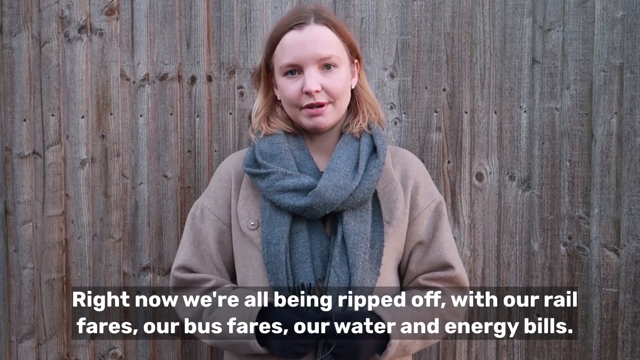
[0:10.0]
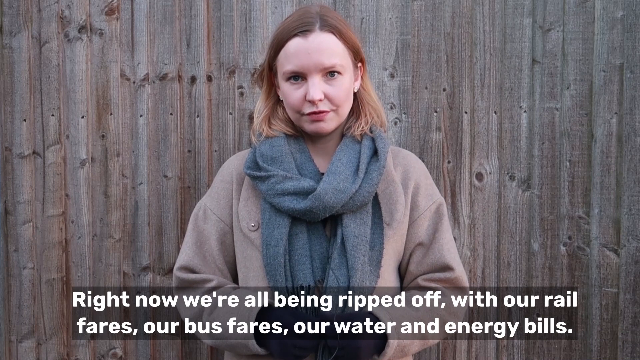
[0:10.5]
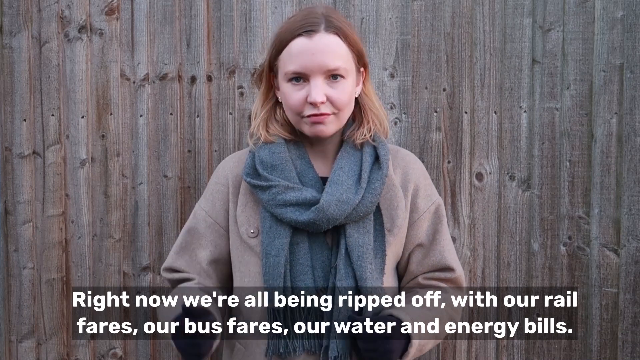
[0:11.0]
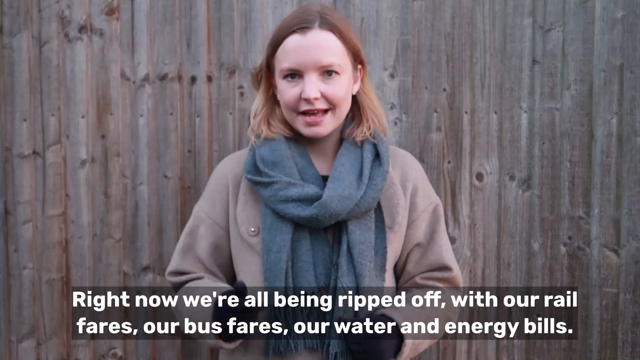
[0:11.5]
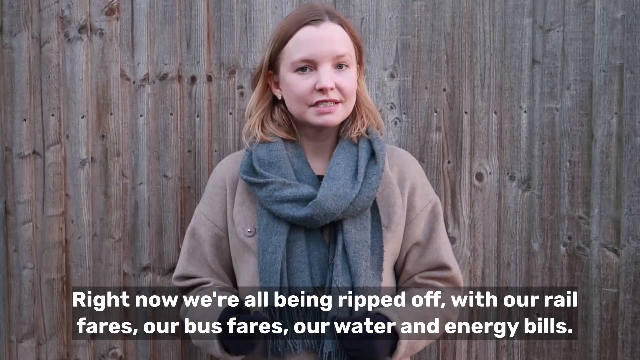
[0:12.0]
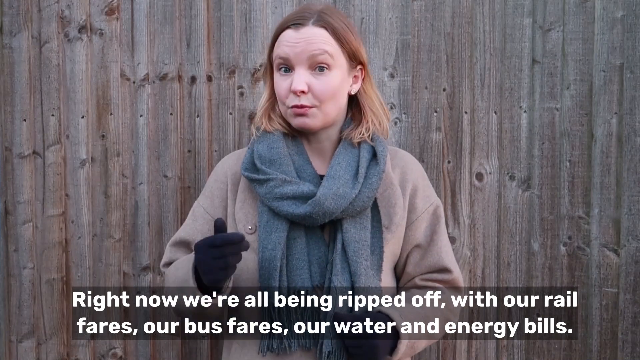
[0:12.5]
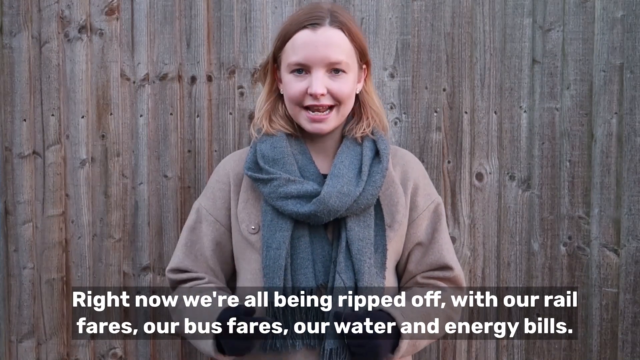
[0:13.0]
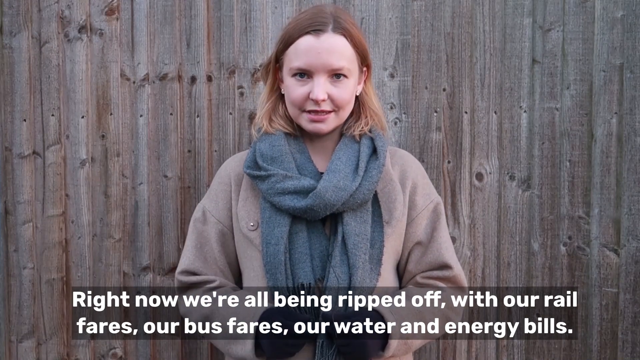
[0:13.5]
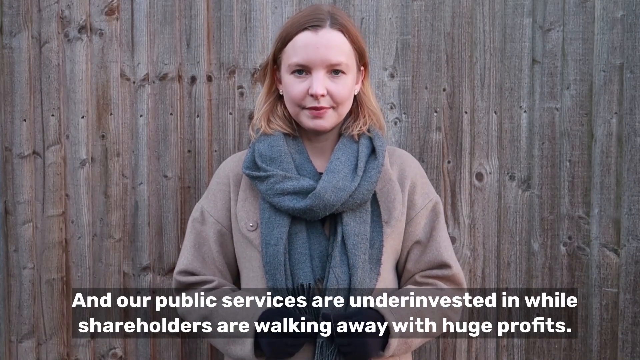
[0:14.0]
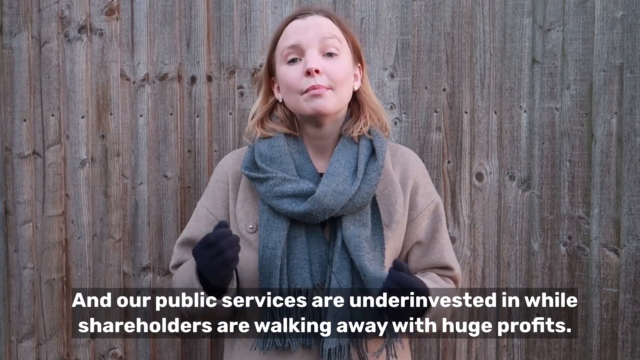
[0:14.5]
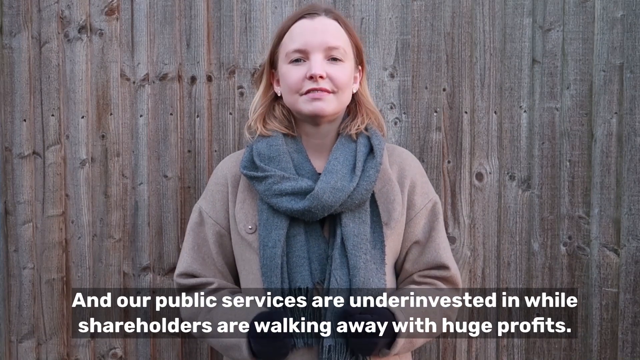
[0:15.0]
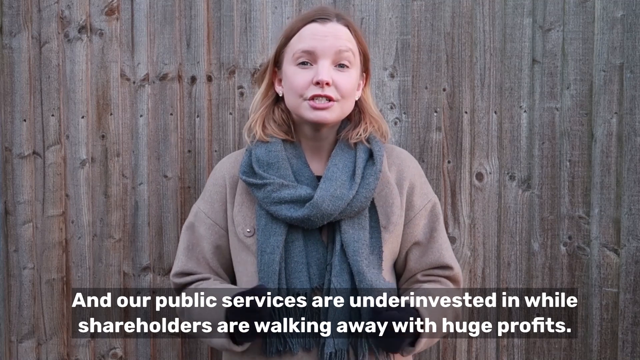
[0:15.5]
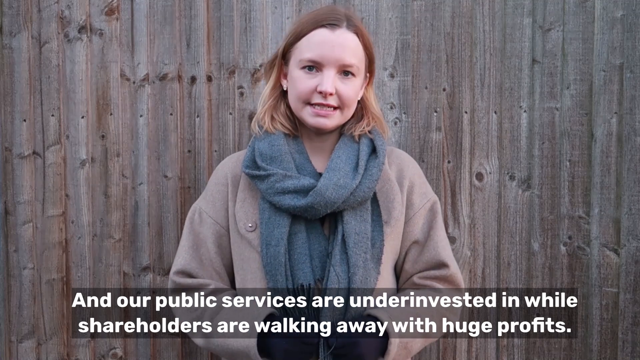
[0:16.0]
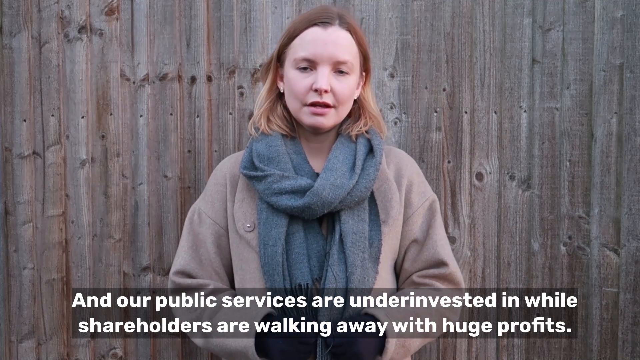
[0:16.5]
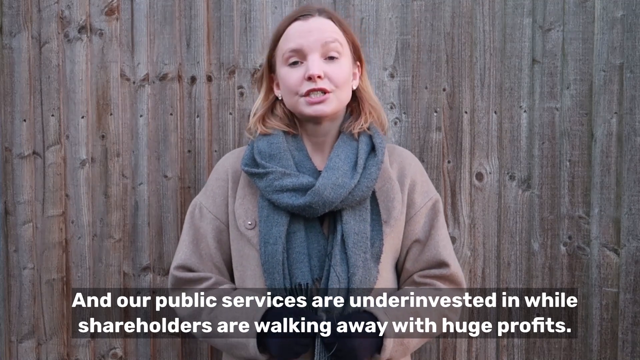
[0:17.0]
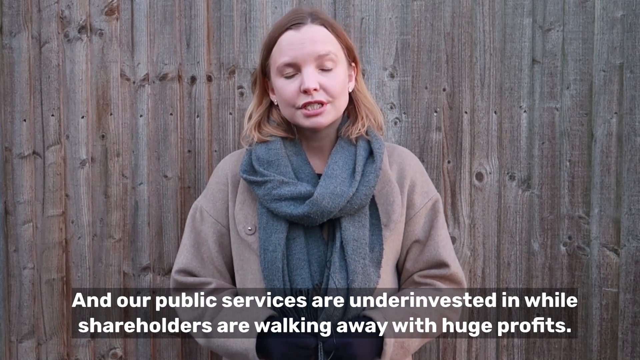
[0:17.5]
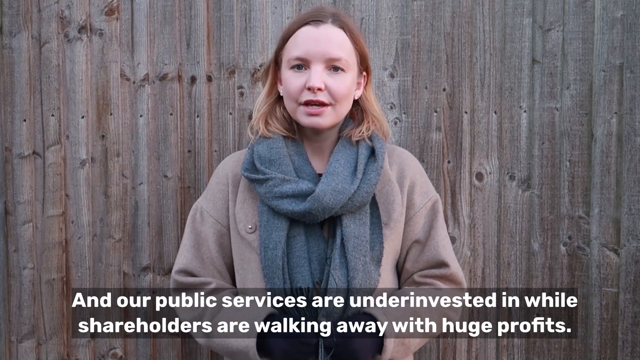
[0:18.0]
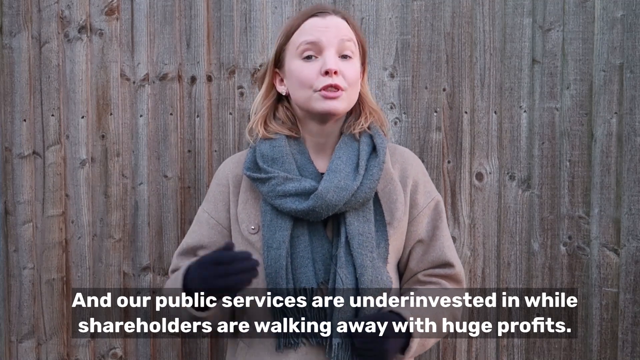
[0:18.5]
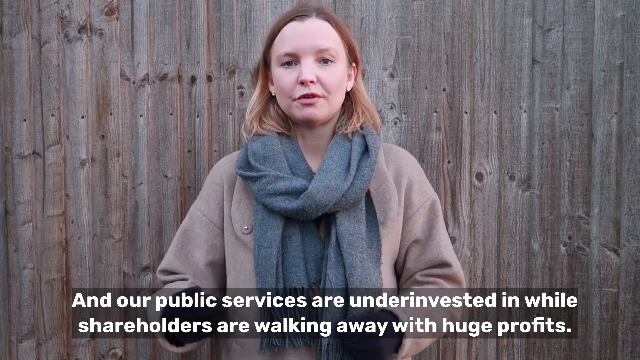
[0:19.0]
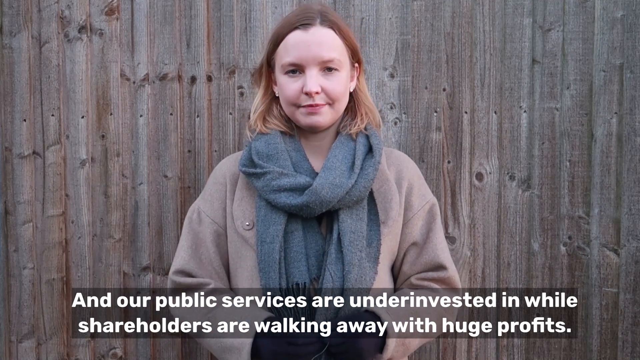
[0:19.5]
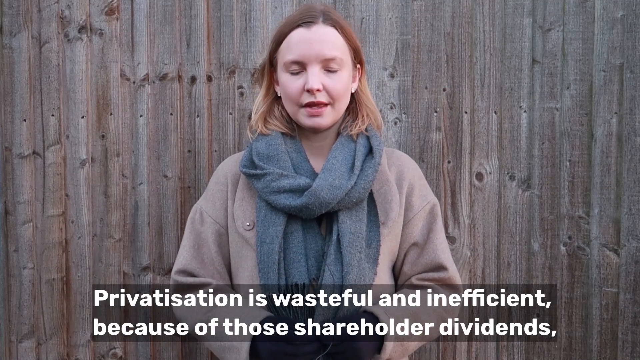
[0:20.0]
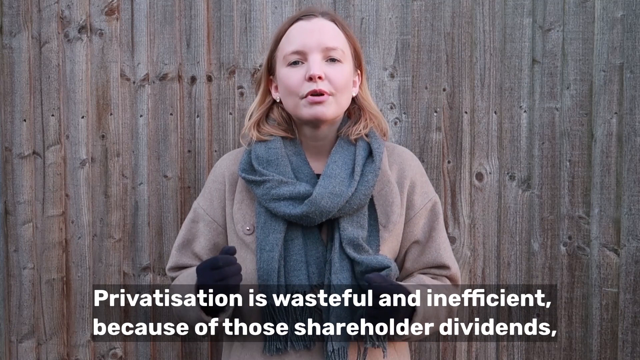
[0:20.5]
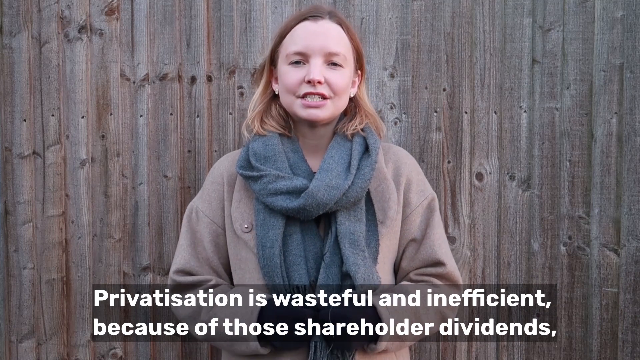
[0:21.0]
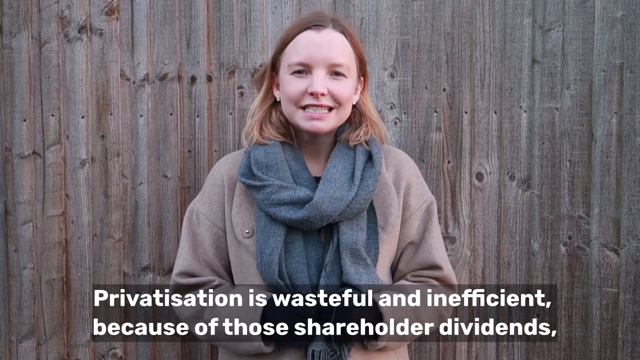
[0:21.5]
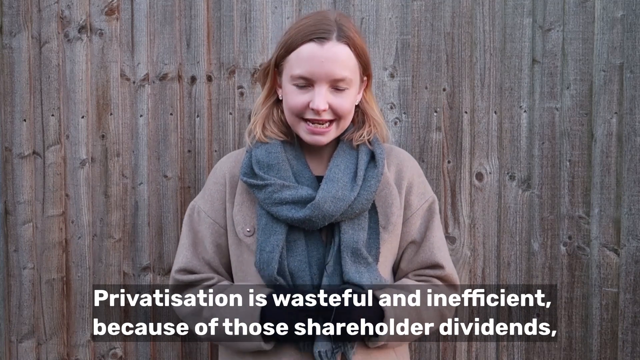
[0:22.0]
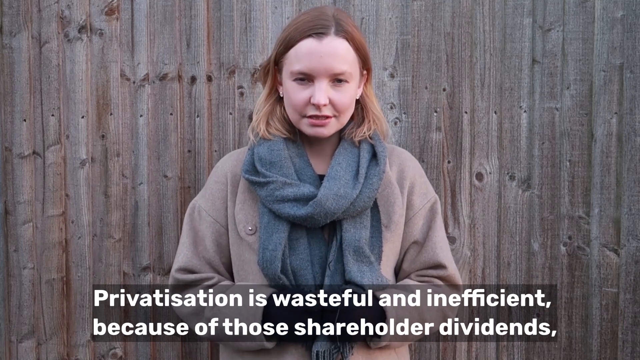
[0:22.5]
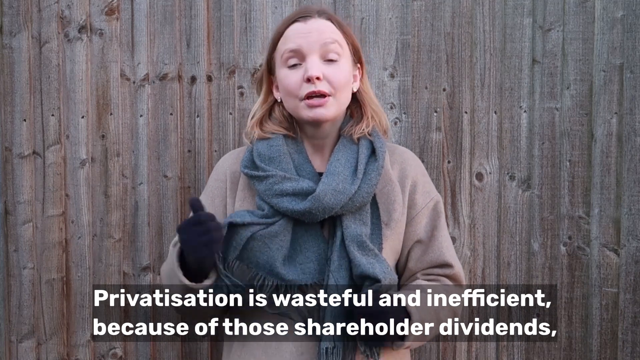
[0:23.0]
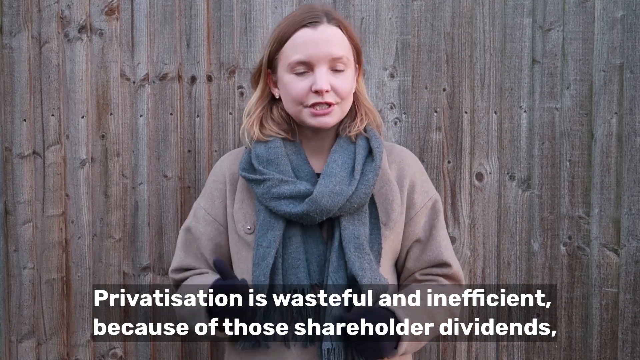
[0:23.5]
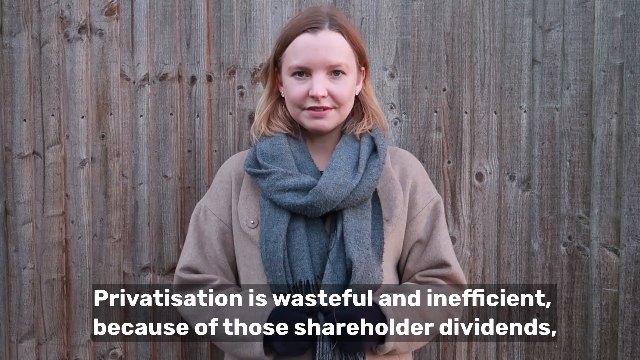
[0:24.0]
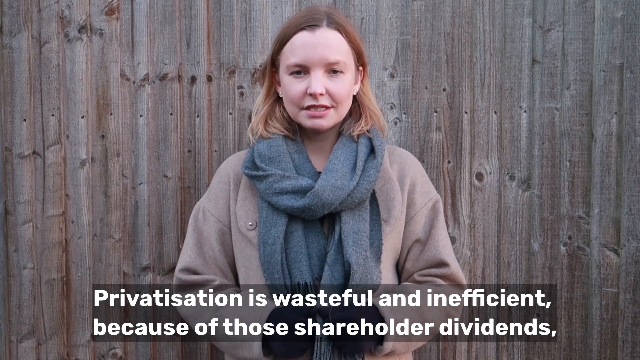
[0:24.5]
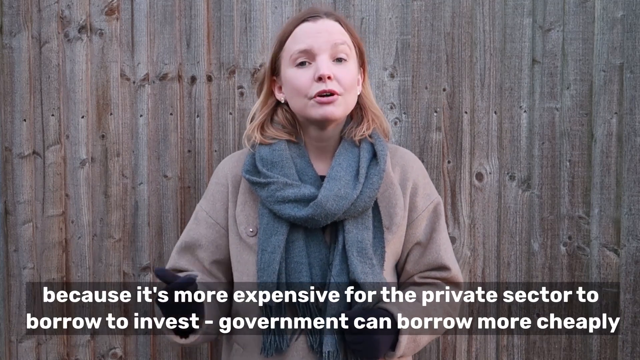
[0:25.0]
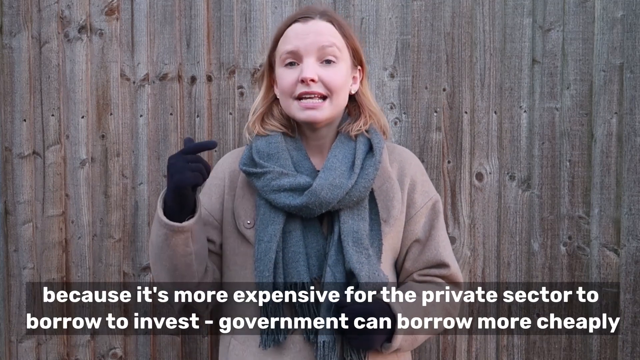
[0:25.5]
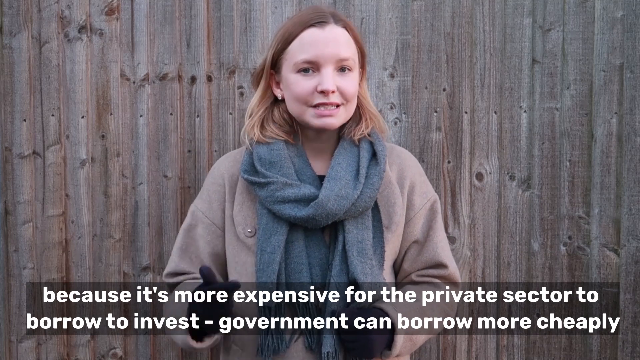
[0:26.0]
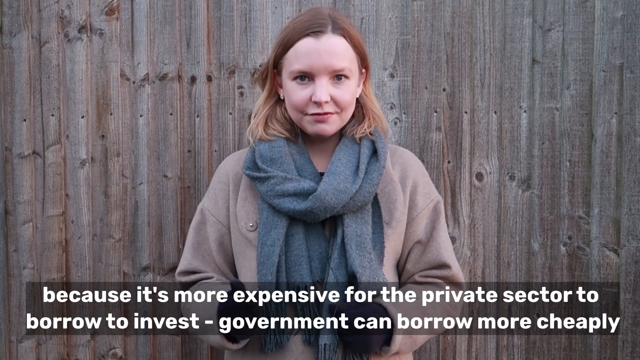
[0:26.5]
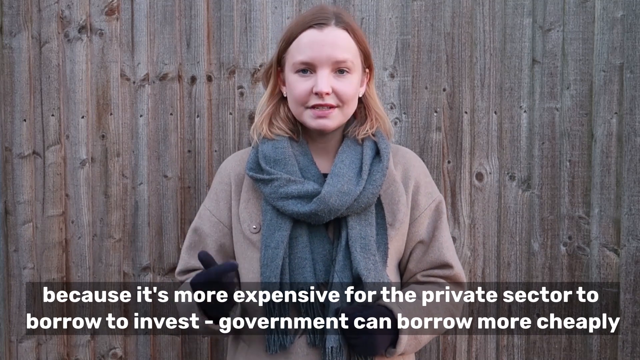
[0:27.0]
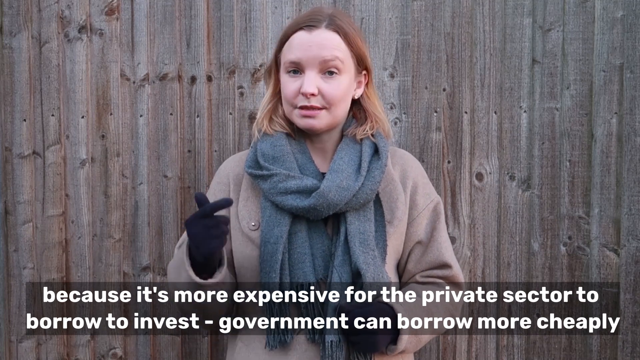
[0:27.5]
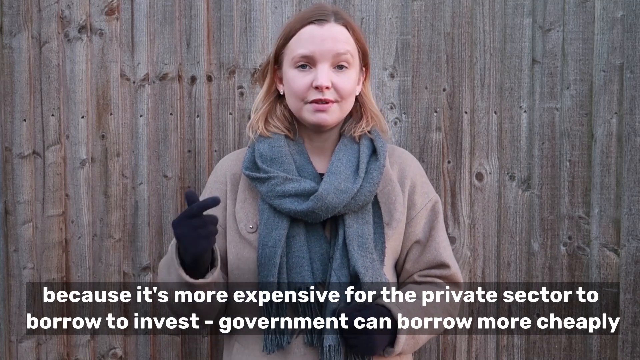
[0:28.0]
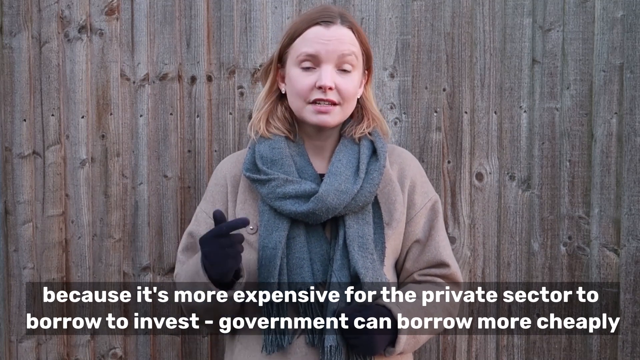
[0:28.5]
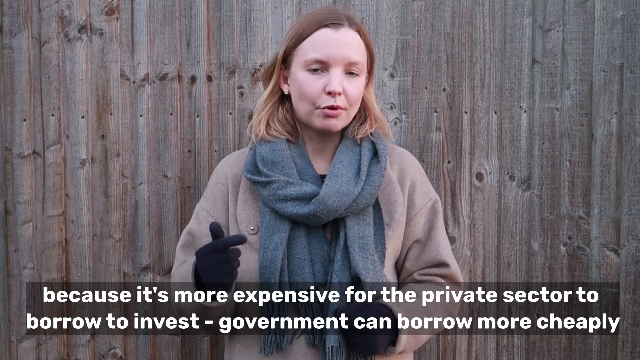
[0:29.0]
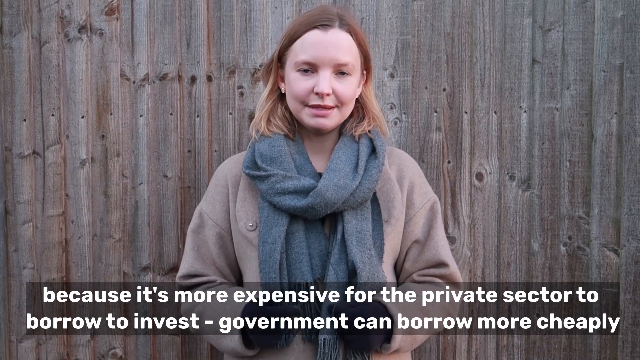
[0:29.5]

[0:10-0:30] The woman is still standing against a wood fence wearing her coat, speaking directly to the camera with full eye contact. She speaks passionately and moves her hands as she talks, for emphasis. She doesn't seem upset, but she addresses the viewers in a very direct manner. She is a white, middle-aged woman.